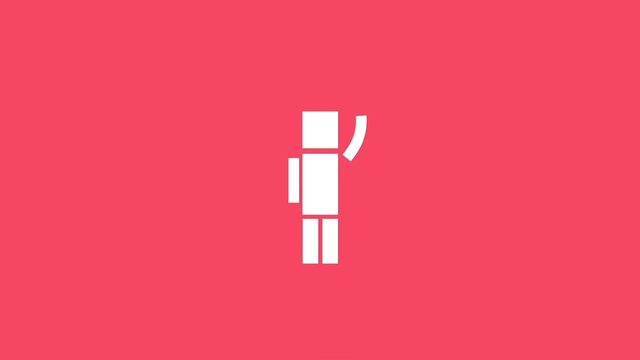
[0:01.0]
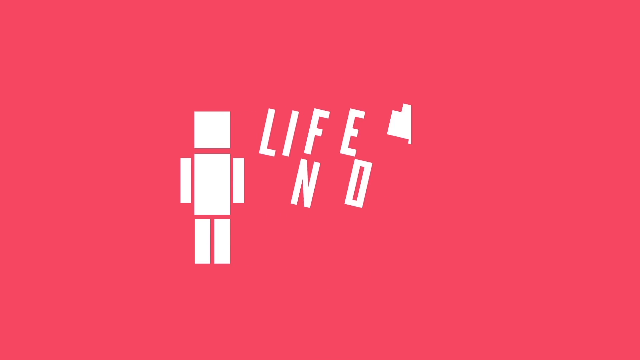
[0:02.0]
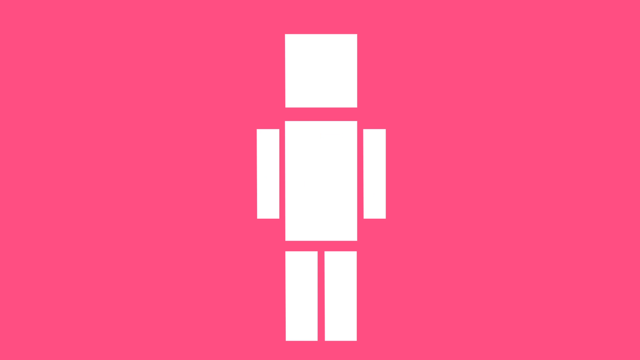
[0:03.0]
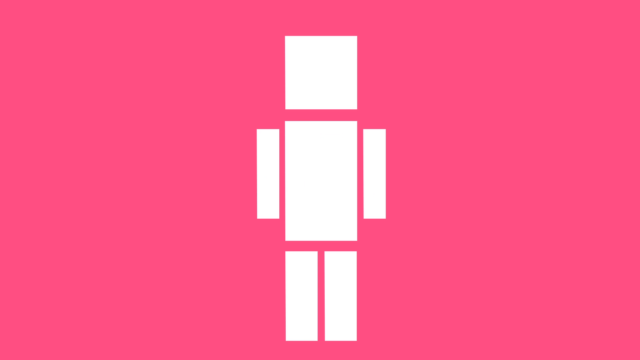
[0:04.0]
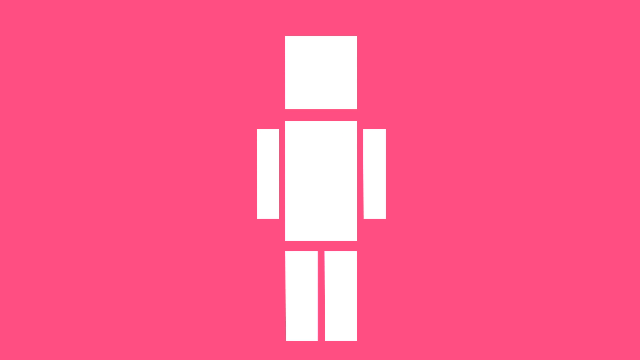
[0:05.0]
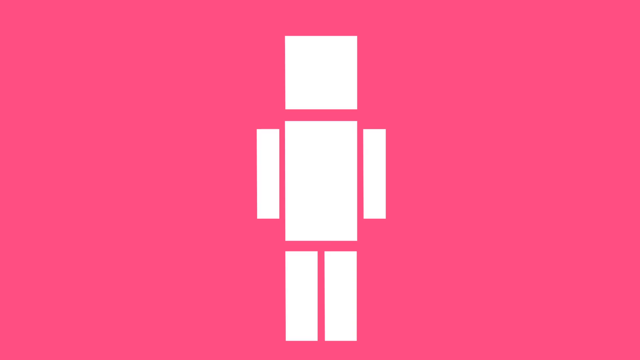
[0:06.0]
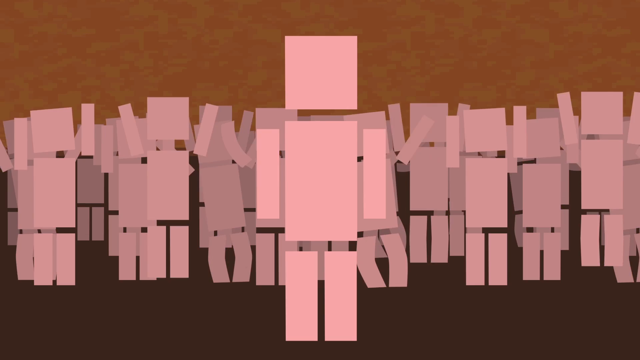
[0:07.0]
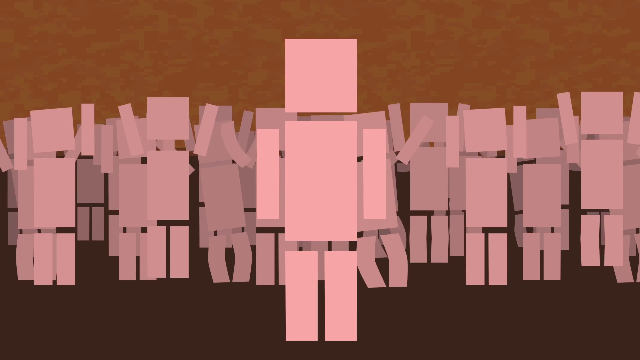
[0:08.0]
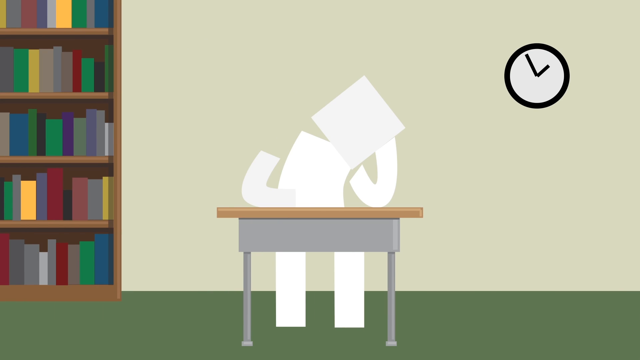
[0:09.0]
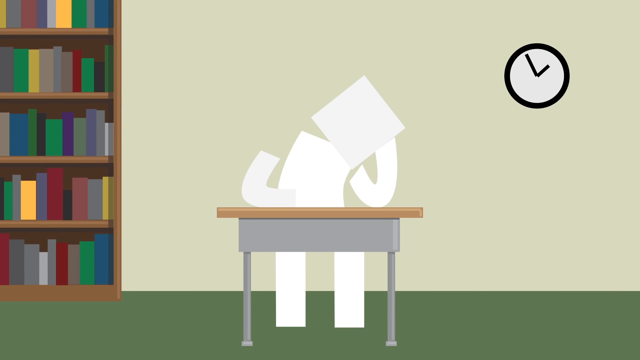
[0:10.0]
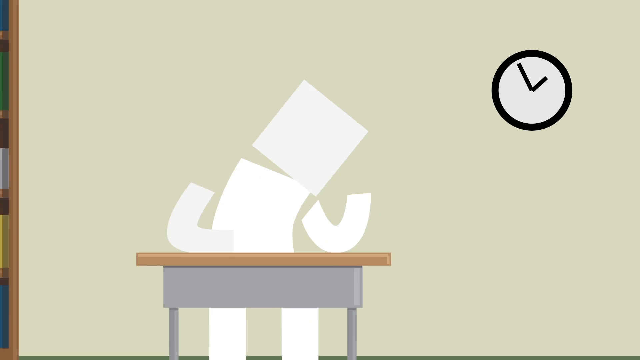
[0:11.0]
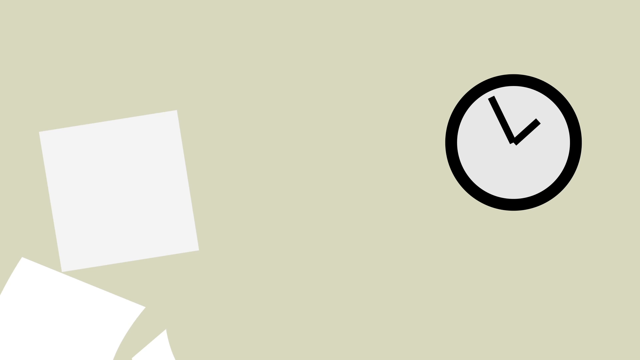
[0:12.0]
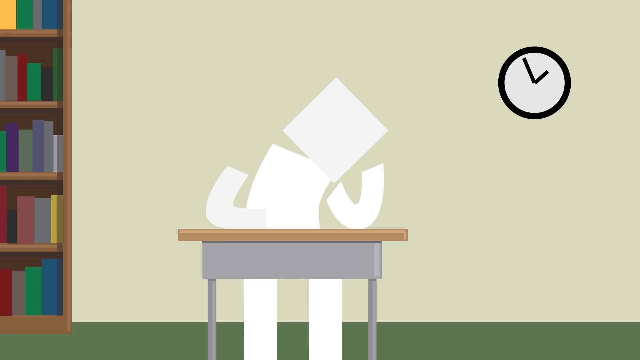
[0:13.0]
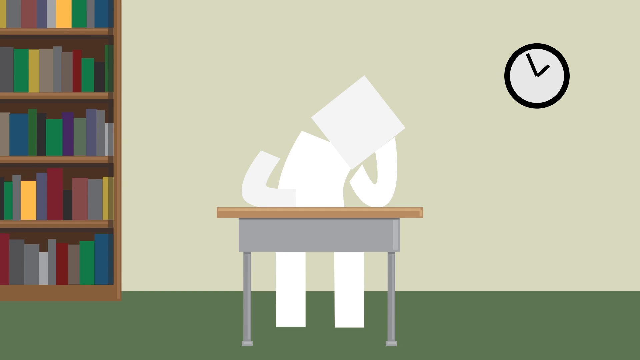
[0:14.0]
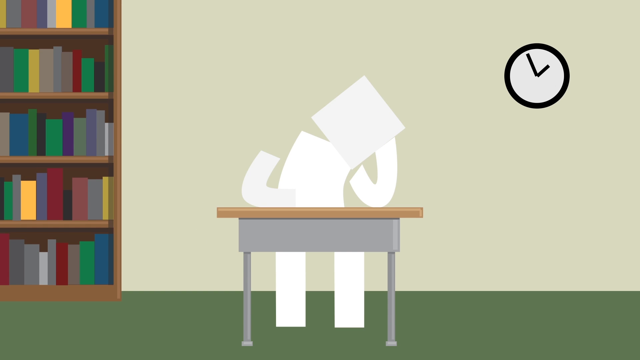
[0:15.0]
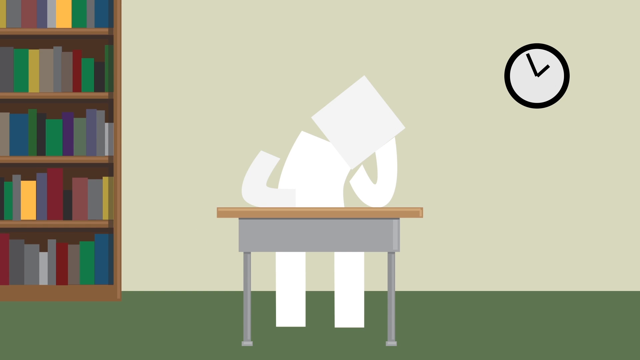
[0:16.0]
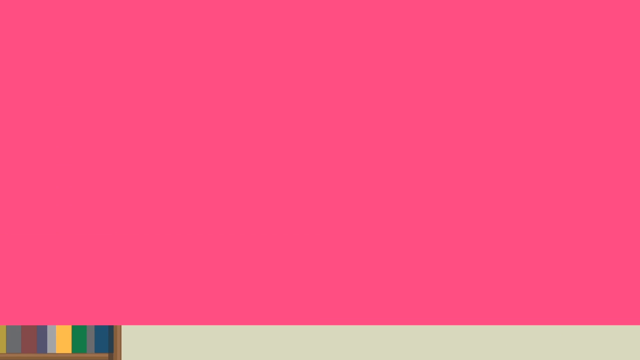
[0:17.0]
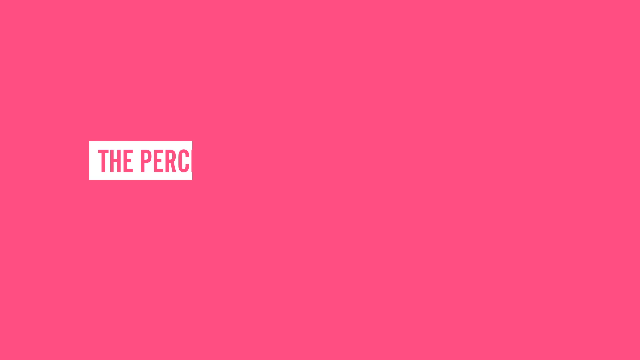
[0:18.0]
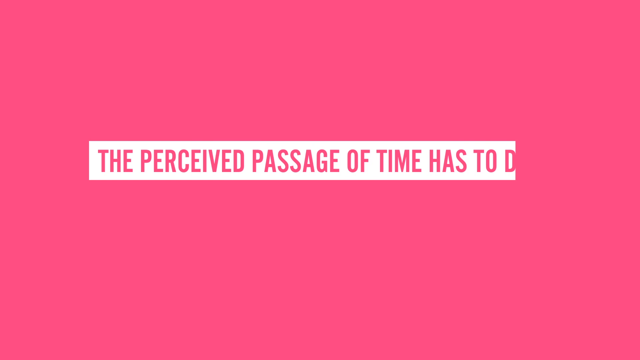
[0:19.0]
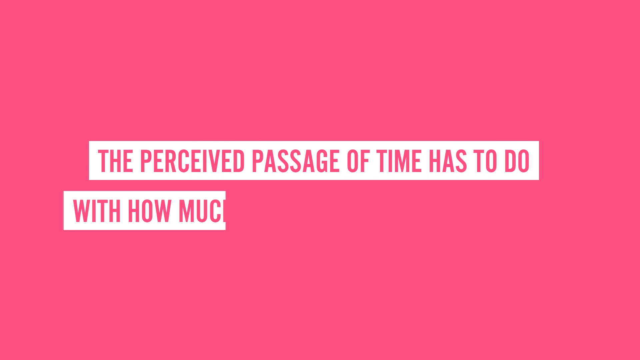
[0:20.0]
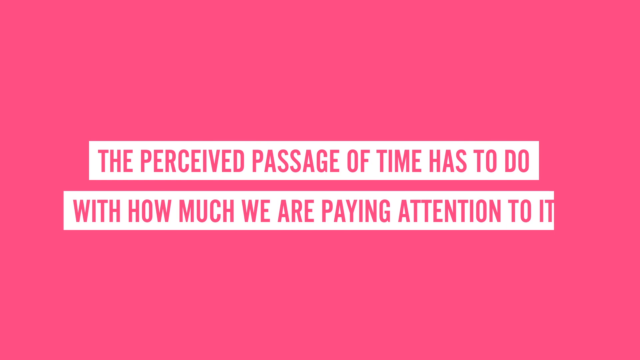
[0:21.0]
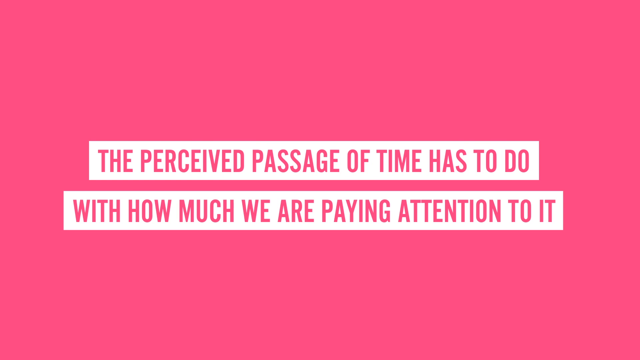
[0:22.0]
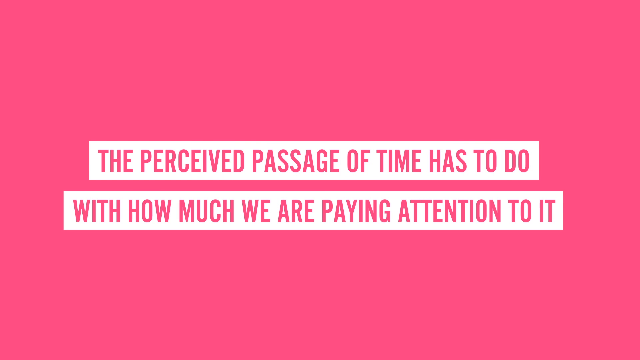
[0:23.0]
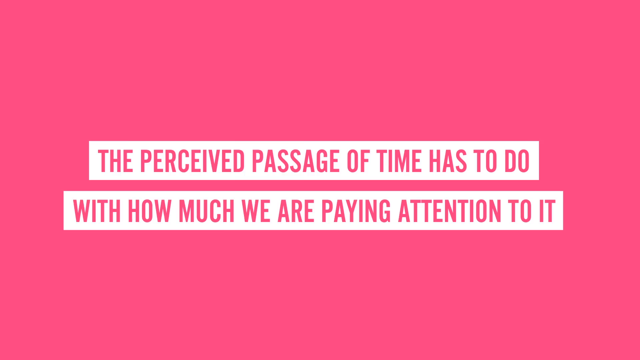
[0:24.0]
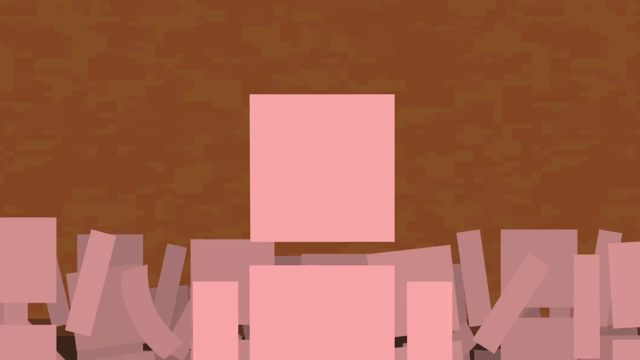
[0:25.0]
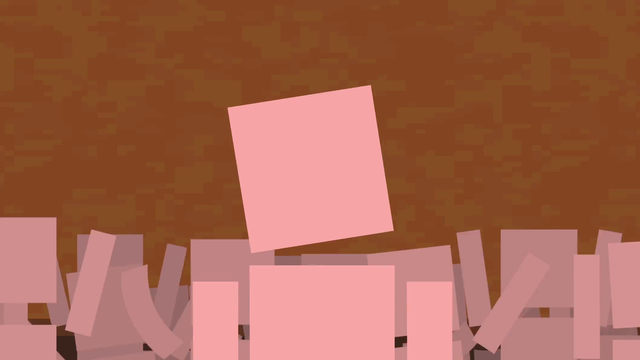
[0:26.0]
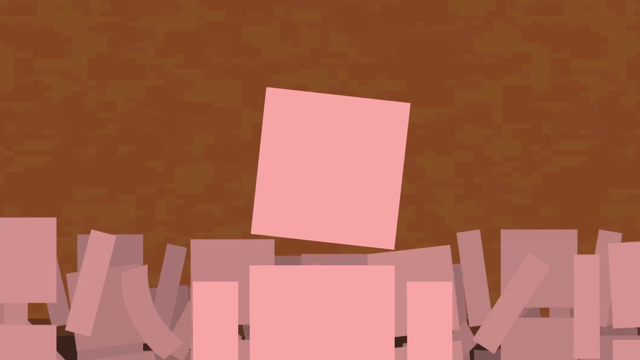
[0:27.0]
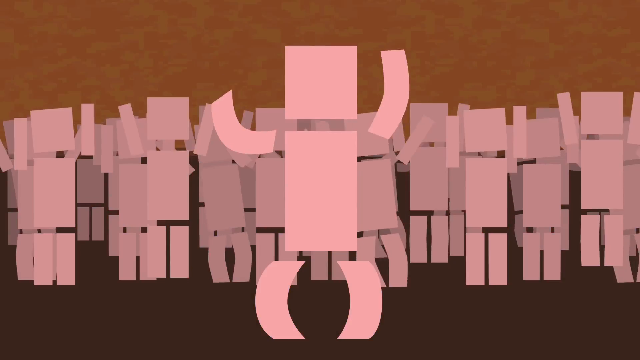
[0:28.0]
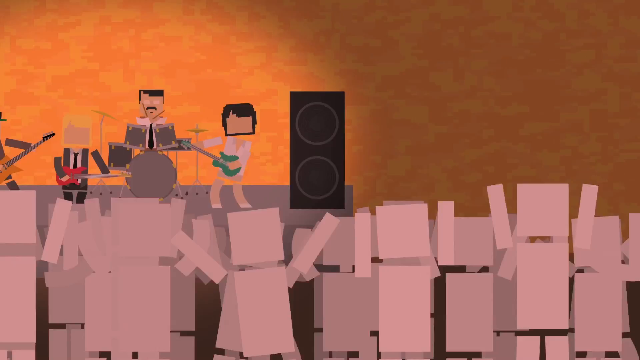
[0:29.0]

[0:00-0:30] An icon pops up from the bottom of a flat, reddish-pink background. It is a person or humanoid-like figure made of rectangles: a white square for the head, a white rectangle for the body, two longer but smaller rectangles for the arms, and two medium-sized rectangles for the legs, in a flat, modern, minimalist style. Flat white block text in a narrow sans serif font converges in the center of the screen, reading "life noggin". Just to the right of the word "life" is a pixelated block representation of, perhaps, a brain, and the word "noggin" is below "life", lined up with it. The rectangle blockhead character waves with its left arm. The video cuts to a medium close-up in which most of the blockhead character takes up the center of the screen, his head moving up and down. The scene quickly dissolves to a brown and tan camouflage-like background with a crowd of similar blockhead characters in the middle ground, while the main blockhead character remains in the foreground. The crowd is in a festive mood, some with their arms in the air and some jumping up and down, and a red light flashes as if in a party environment. A wipe transition comes in from the left side of the screen, revealing the blockhead character sitting at a school desk. On the left of the screen is a bookshelf five shelves high with plenty of books. Behind the bookshelf and the whole scene is a pastel wall in a very neutral off-white greenish/gray tone. In the upper right-hand corner is a clock, primarily a white circle with a black border and a minute hand and hour hand, in the same flat minimalist style as the blockhead student. The student tilts his head with its left hand on its head, as if bored, having difficulties, or maybe tired. The camera zooms in to the clock, which the blockhead character is looking at. A white transition comes down from the top of the screen to pinkish-red block letters over a white banner background, reading "The perceived passage of time has to do with how much we are paying attention to it". The pinkish-red scene wipes away to the right, returning to the party environment, where the other blockhead characters party behind the main blockhead character. The lights are flashing, and the main character appears to be dancing, tilting his head from side to side with curved legs in a horse-like stance. The camera pans to the left, revealing a band on stage: four members who look like two guitarists, a bass player, and a drummer. They are in a similar block-like design but have some color in their skin, compared to the whitish-gray crowd characters. A speaker is on both sides of the band.